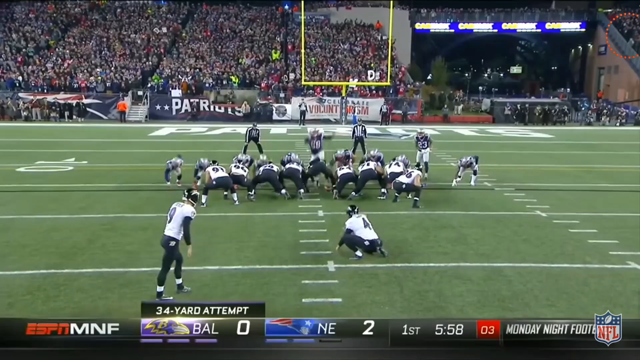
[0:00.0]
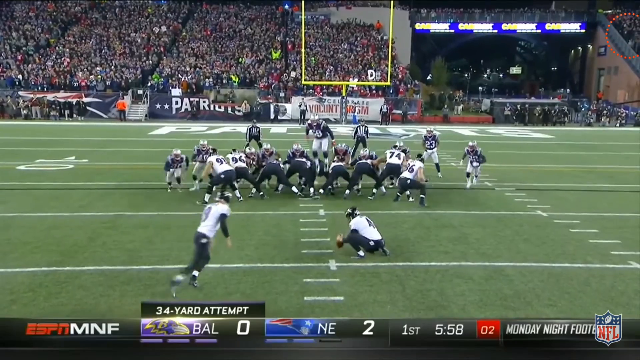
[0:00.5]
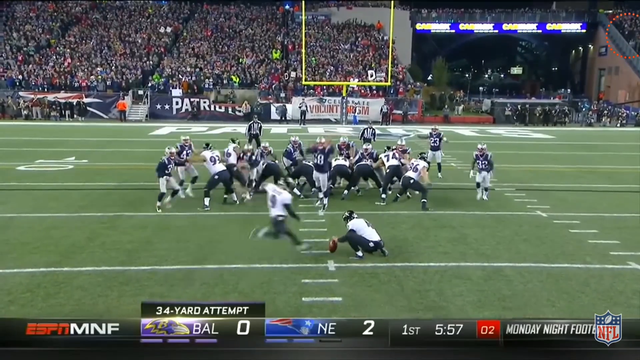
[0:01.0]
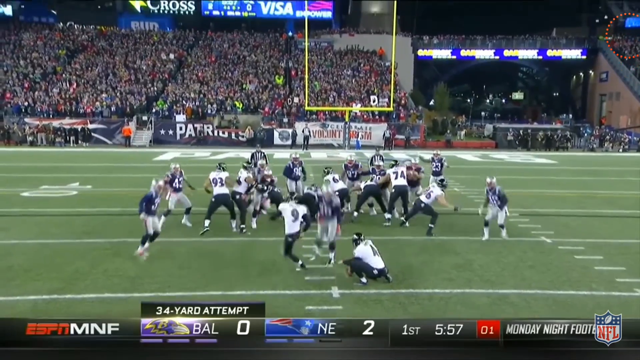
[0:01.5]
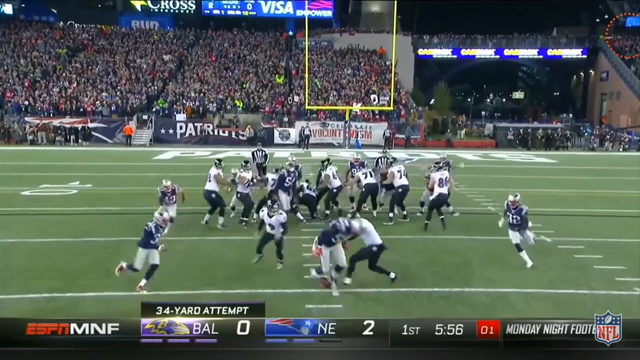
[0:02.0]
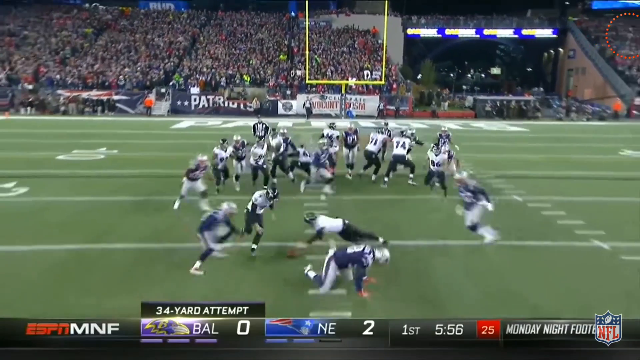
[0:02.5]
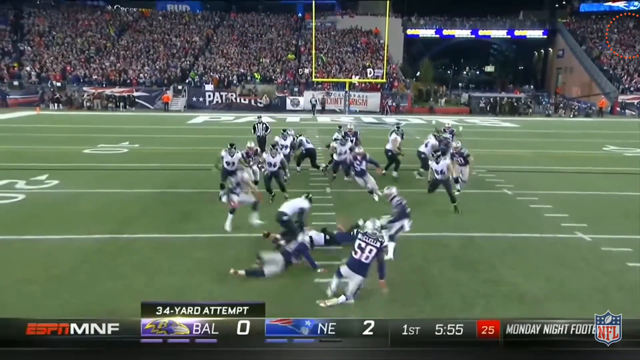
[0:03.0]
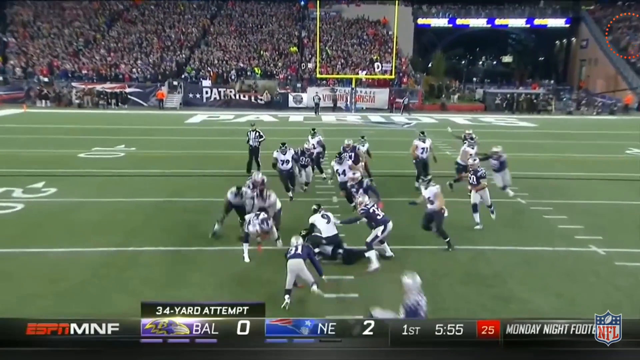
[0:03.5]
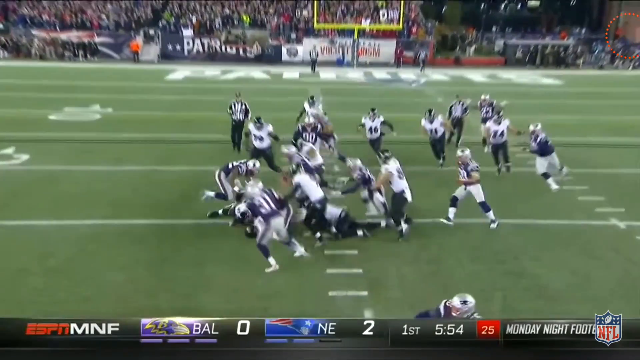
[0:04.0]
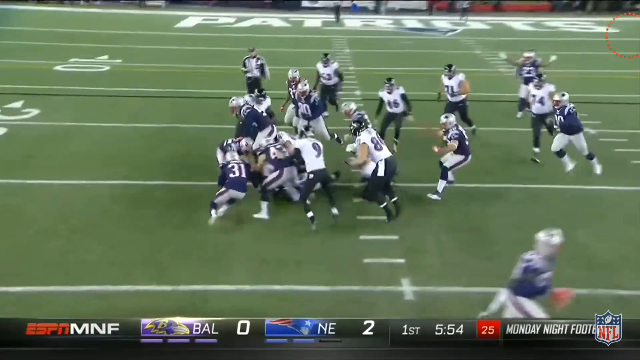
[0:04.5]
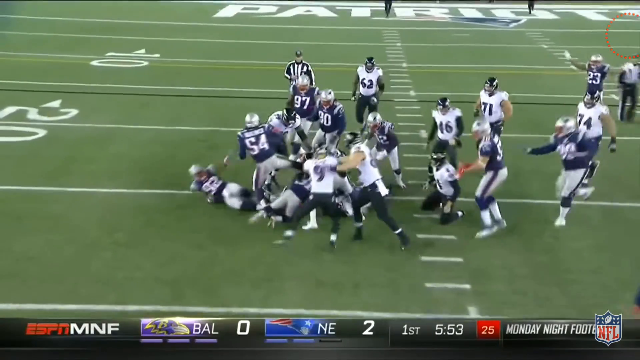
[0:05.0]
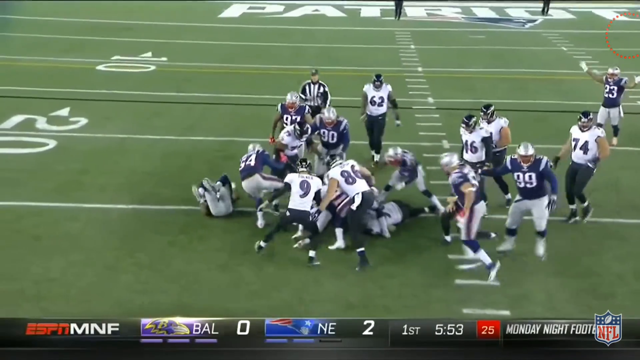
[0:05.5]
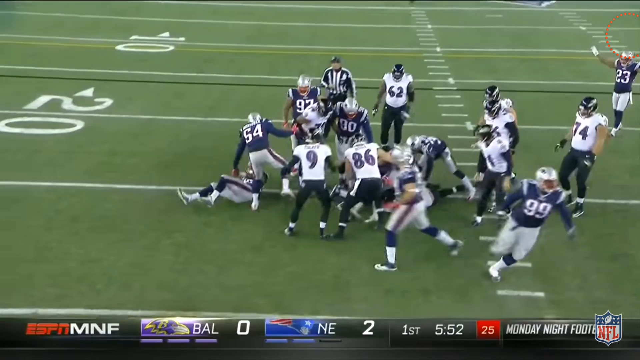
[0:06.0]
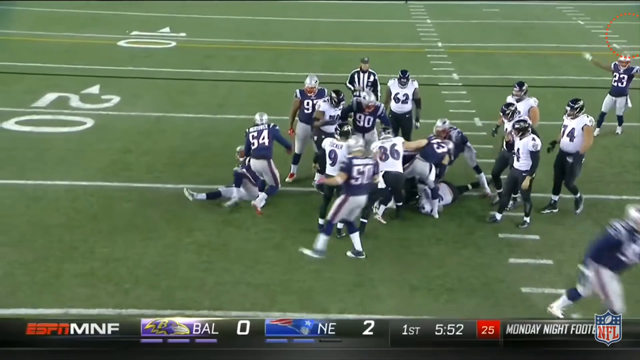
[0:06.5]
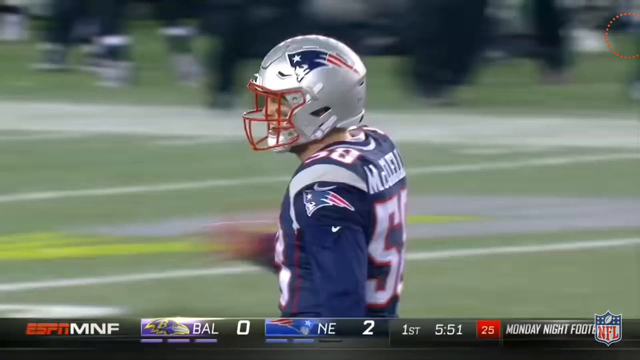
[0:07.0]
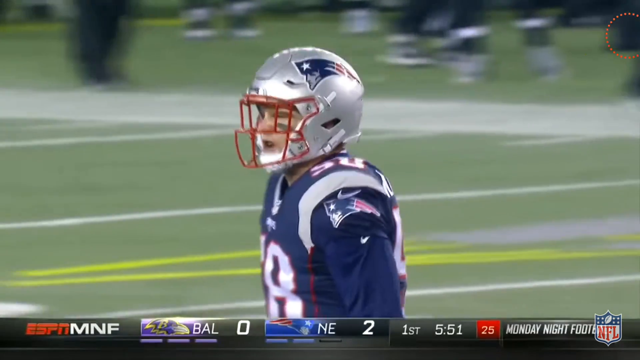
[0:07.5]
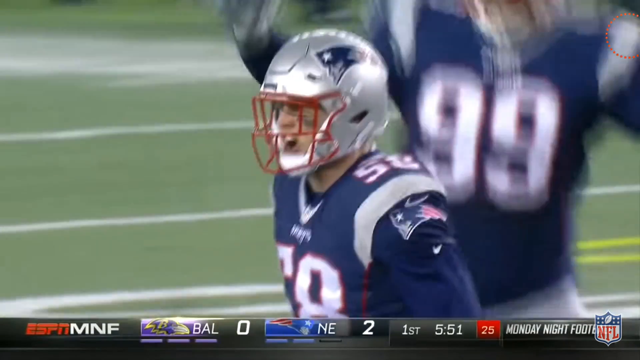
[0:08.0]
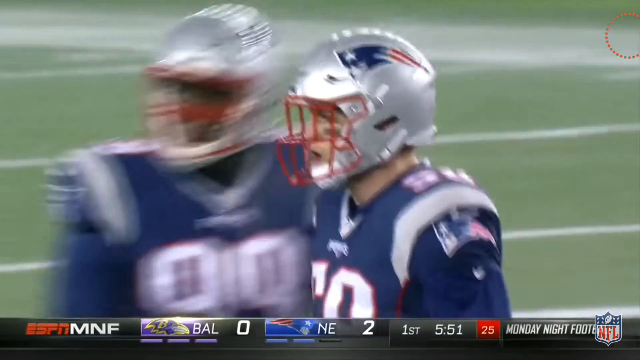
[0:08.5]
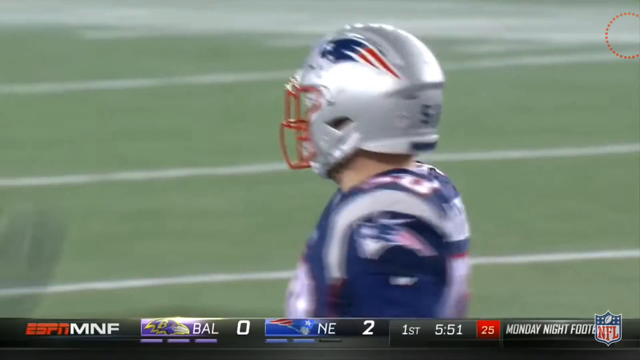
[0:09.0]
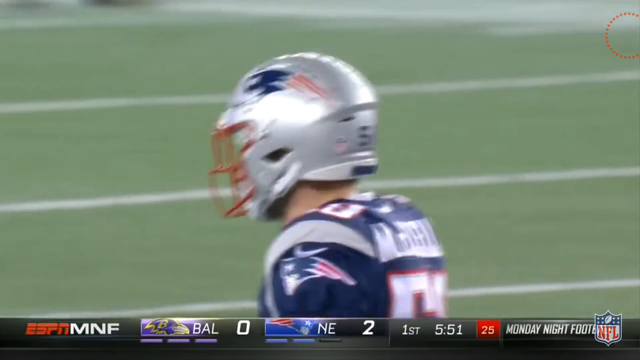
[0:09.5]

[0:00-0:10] A kicker for a team in white jerseys attempts a field goal. The view is from behind the team, with the field goal directly ahead and both teams visible, from a slightly overhead angle but fairly close to field level. As the kicker kicks, it looks like someone is almost trying to sack him, and apparently a man hits the ball with his hand. There seems to be a fumble, the other team seems to try to recover the ball, and it looks like they take possession. The team that recovers the ball is the New England Patriots.